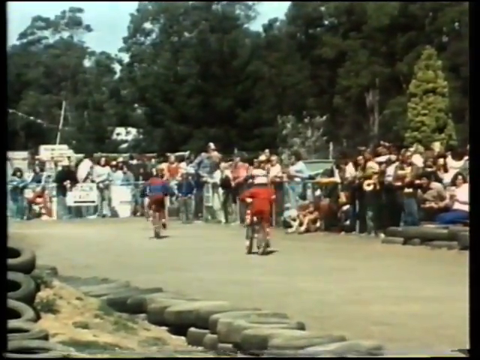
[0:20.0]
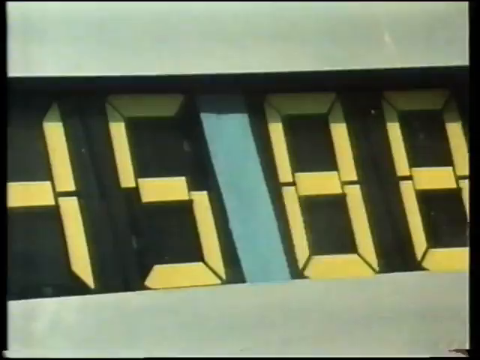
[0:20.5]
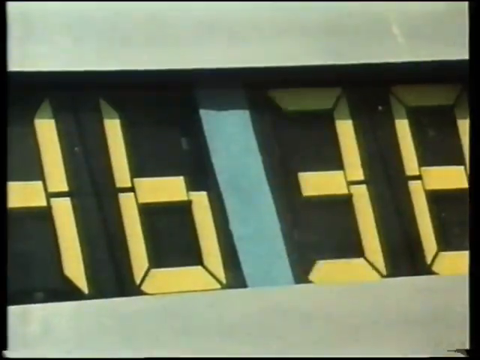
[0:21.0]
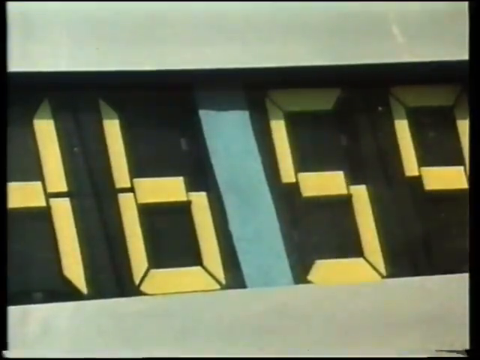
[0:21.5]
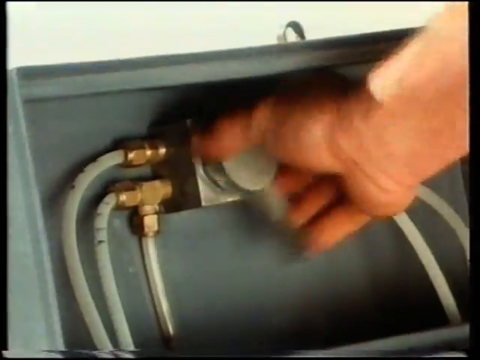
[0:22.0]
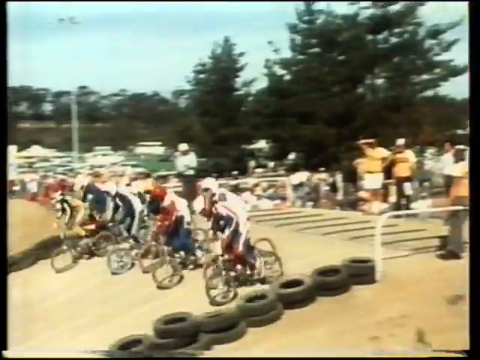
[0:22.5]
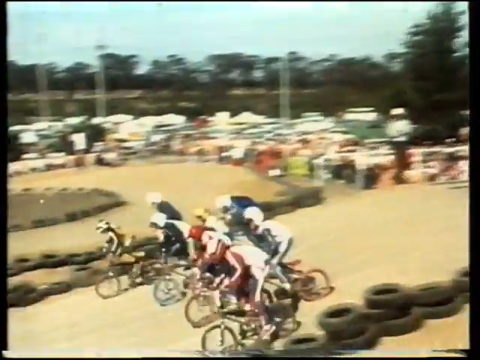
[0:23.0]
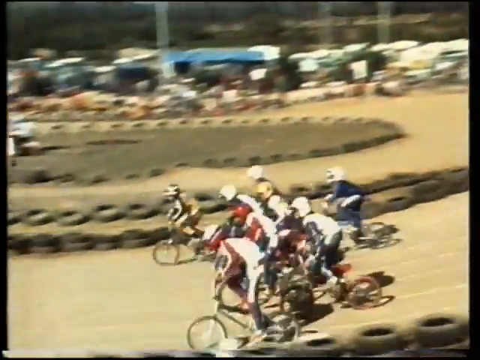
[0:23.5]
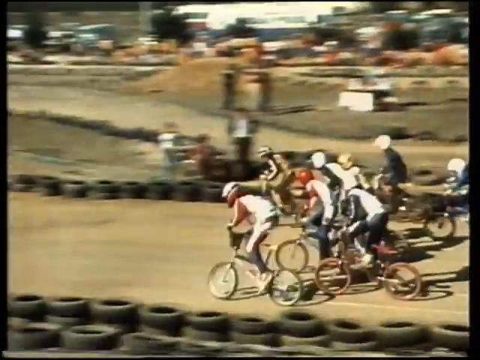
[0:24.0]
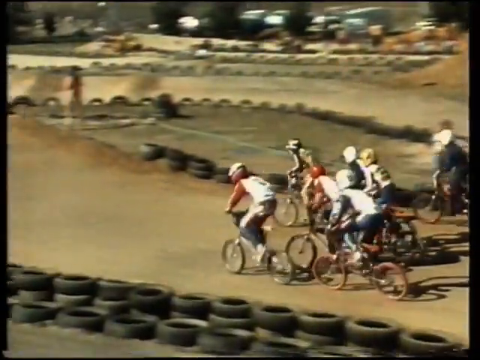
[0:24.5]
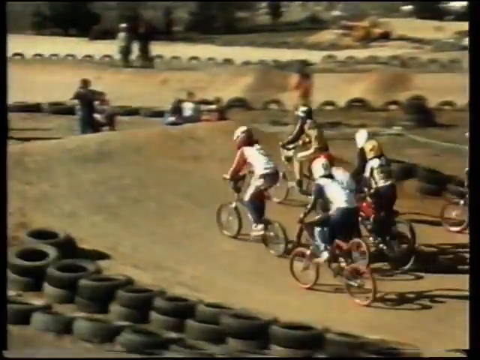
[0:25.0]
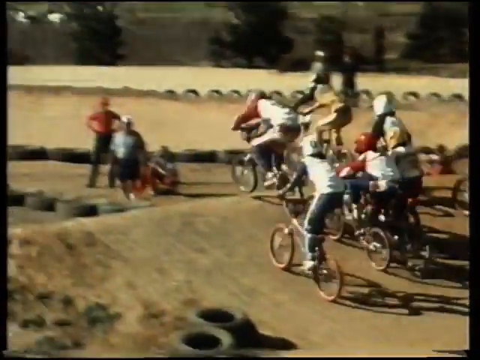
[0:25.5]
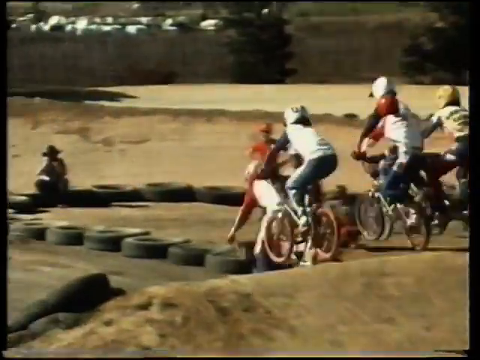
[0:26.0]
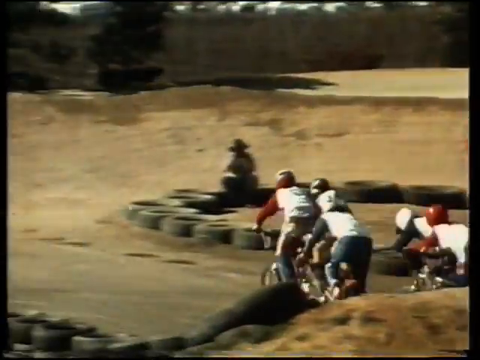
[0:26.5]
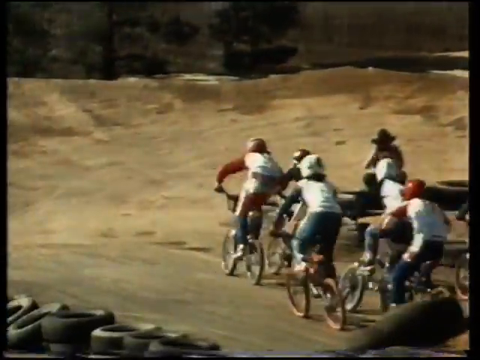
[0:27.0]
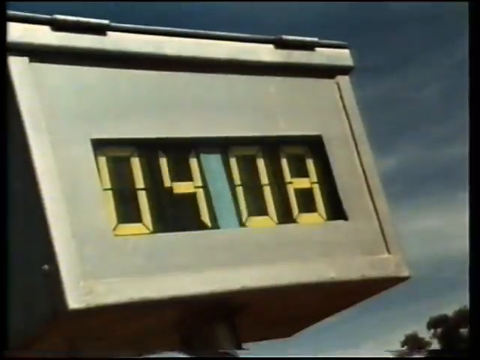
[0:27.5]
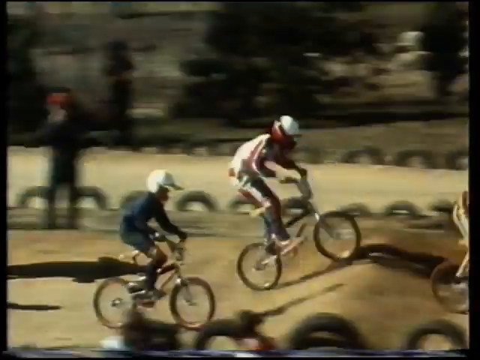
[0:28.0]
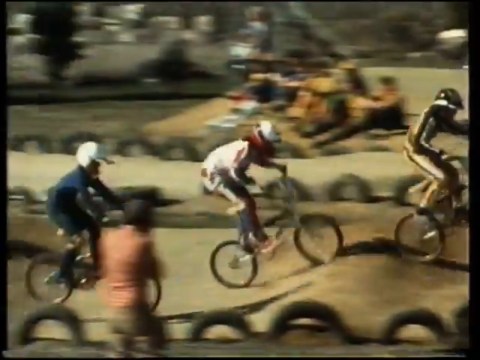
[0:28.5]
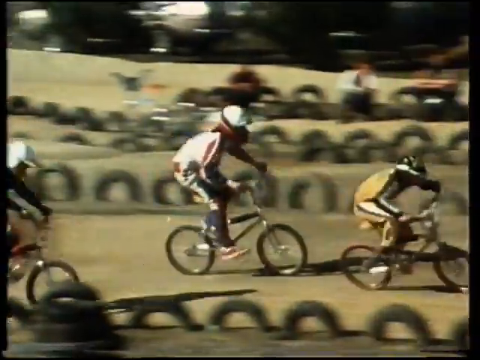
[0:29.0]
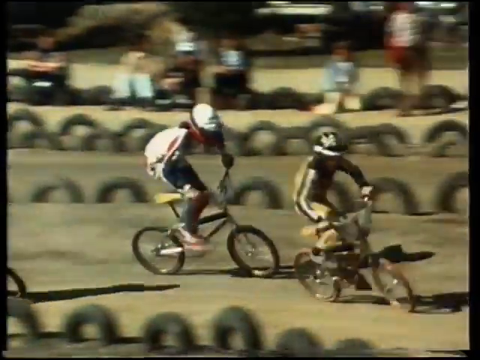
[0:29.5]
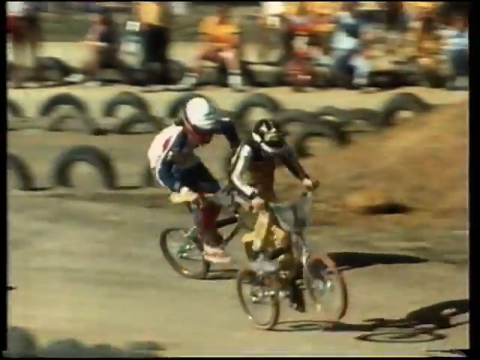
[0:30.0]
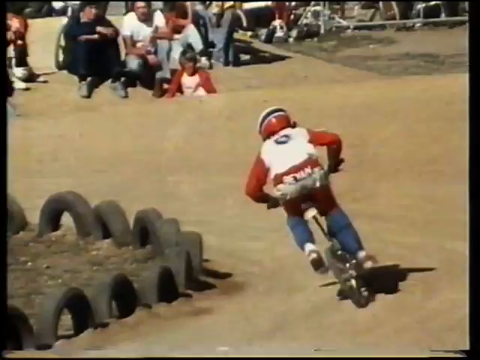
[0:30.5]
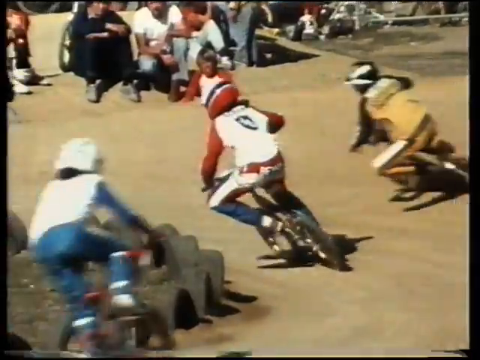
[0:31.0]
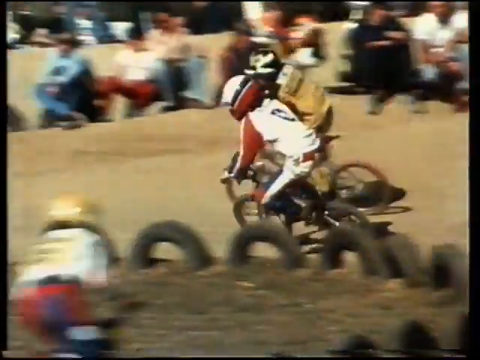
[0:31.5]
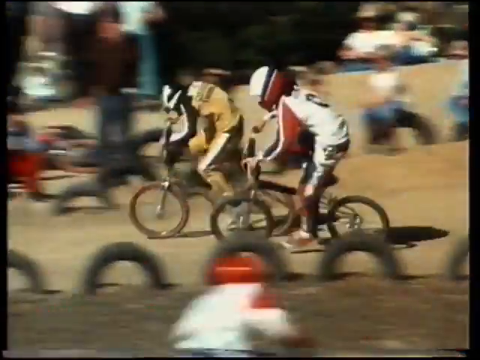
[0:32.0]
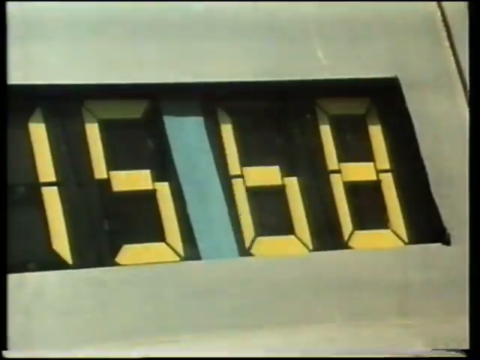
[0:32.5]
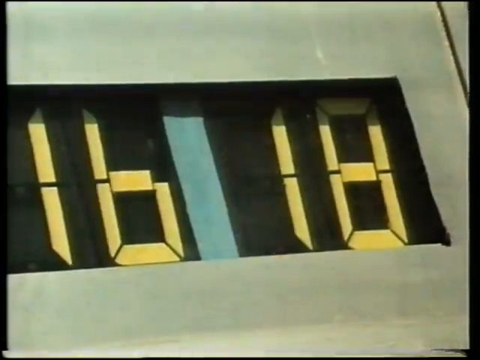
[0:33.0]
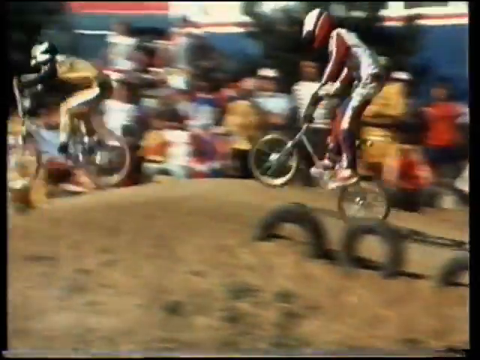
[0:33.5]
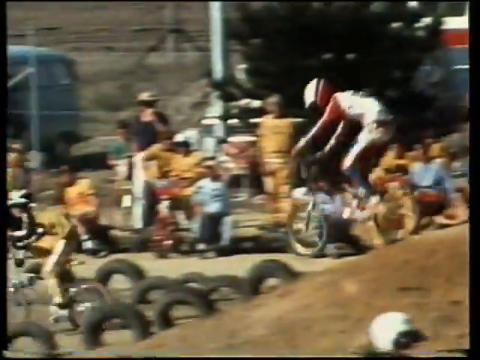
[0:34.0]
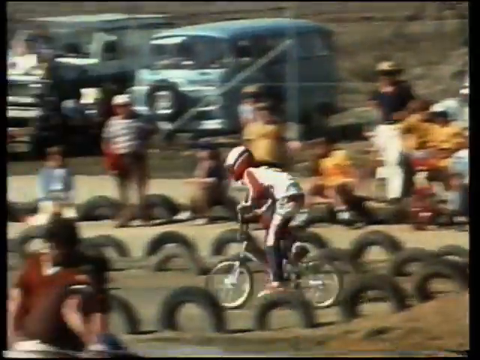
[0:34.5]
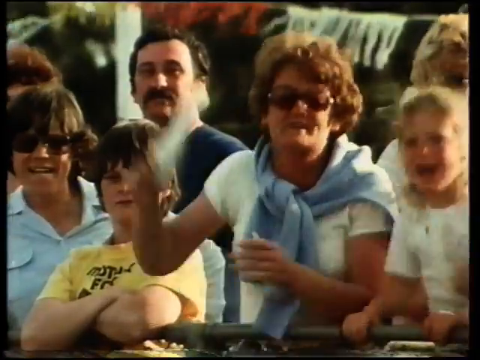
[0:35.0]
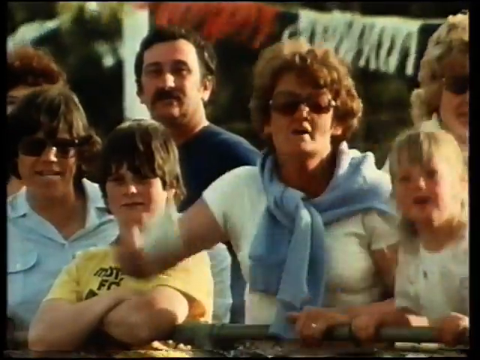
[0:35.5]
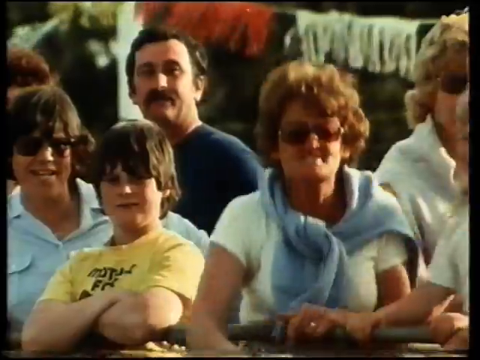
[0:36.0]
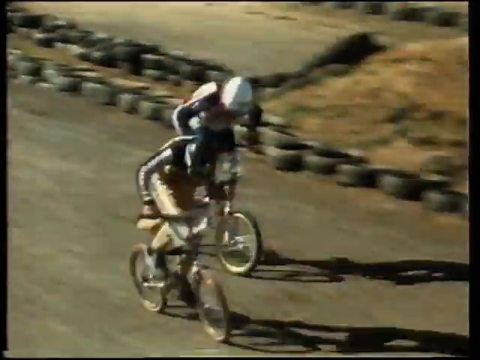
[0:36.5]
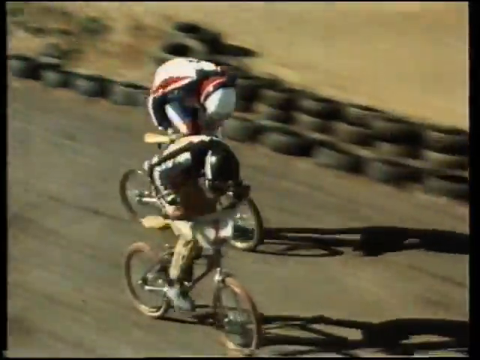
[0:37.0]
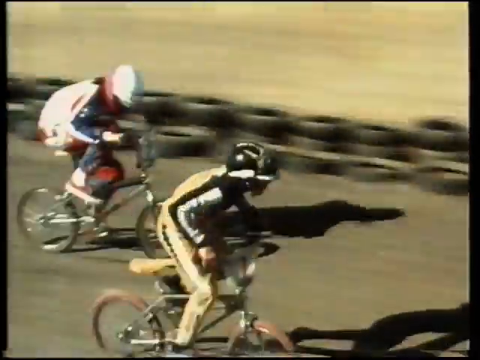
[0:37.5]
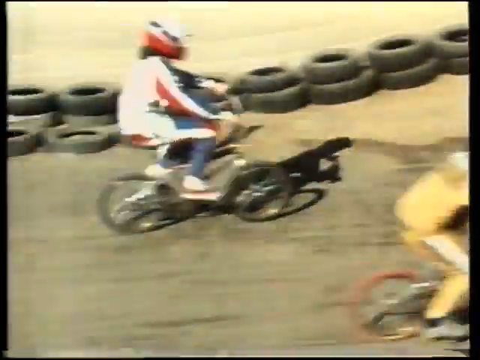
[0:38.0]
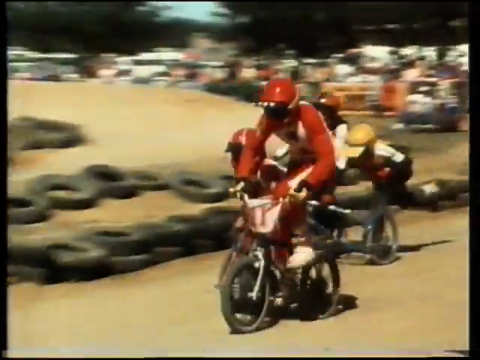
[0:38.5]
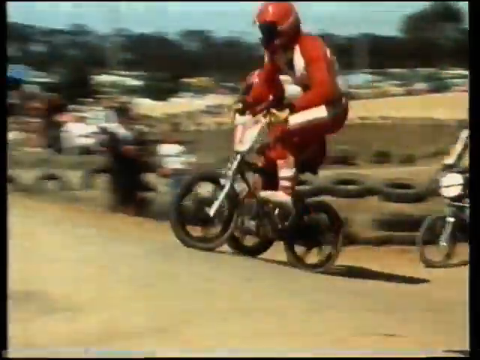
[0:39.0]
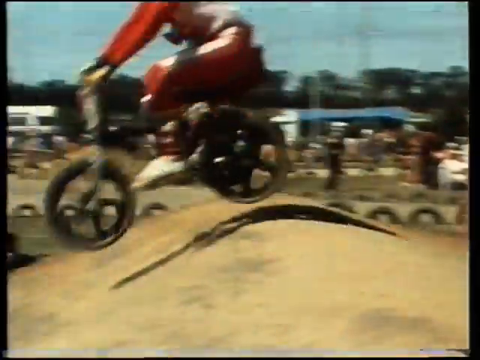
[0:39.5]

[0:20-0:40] The title "1980 BMX racing Australia Oz old school" is in the top left-hand corner. Kids ride their bicycles over some little hills and a big hill, and some of the older kids seem to be showing off, doing wheelies. The crowd cheers, and a very excited mom is shown with a little boy next to her, cheering, presumably for her son or a family member. The old-school timer runs as the kids race the clock, pedaling as fast as they can. The bigger kids appear to be at the front of the pack, with the little ones behind, and the older ones who can pedal faster seem to be the leaders who got ahead of the pack, in particular one kid in all yellow. The mom is shown again in a white shirt with a blue sweater tied around her neck and a very 80s haircut, with a blond child next to her yelling and cheering for their family member; the child could be a girl, since it is hard to tell from the haircut.